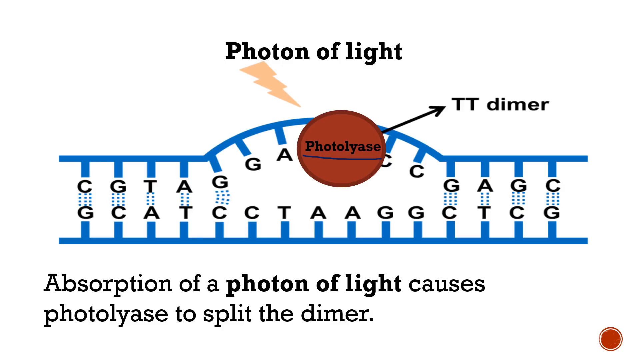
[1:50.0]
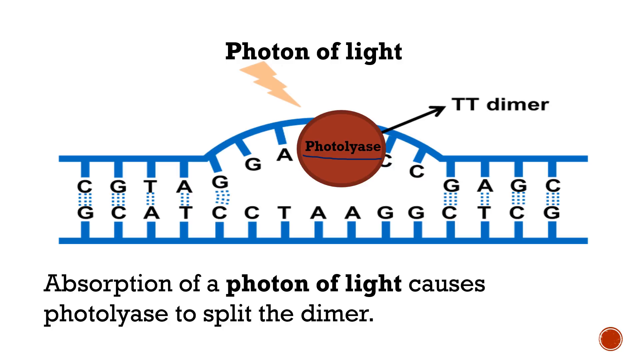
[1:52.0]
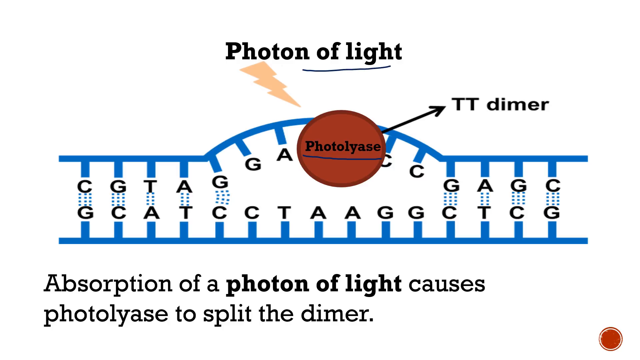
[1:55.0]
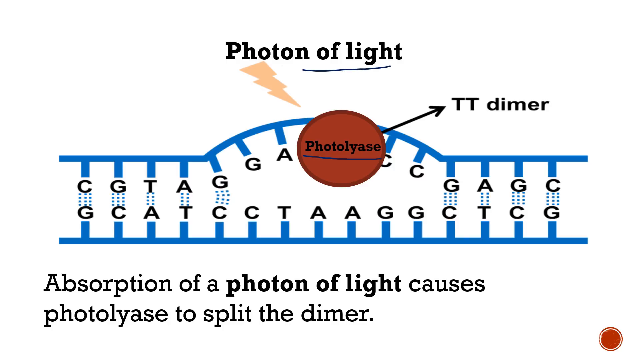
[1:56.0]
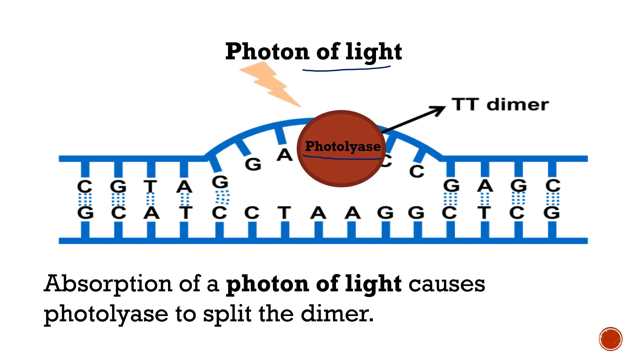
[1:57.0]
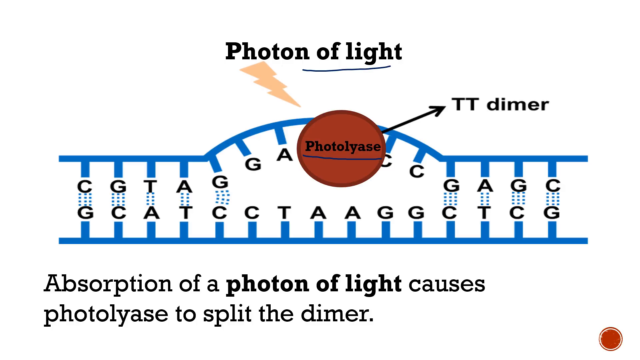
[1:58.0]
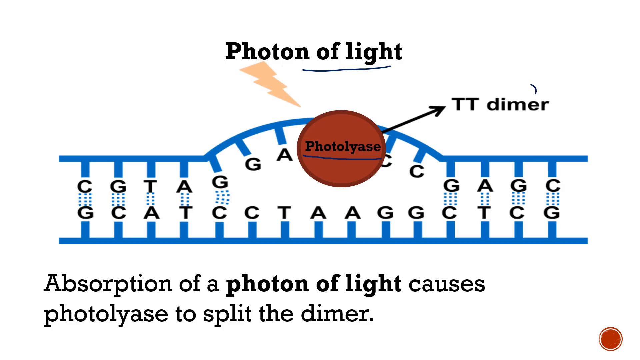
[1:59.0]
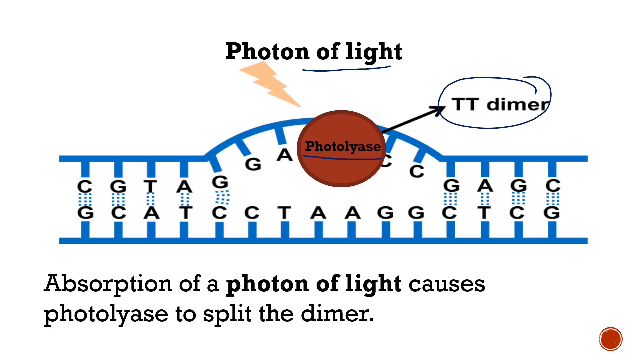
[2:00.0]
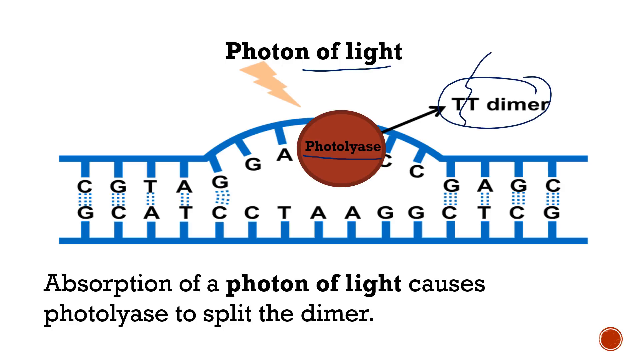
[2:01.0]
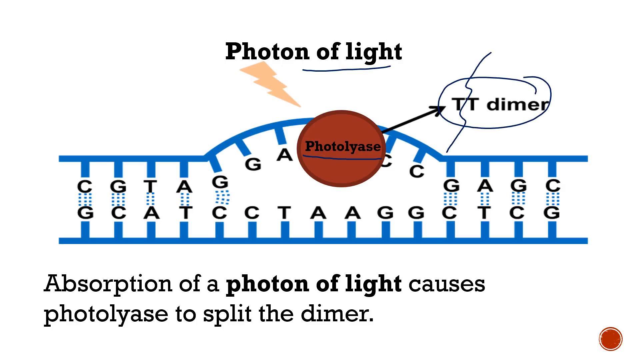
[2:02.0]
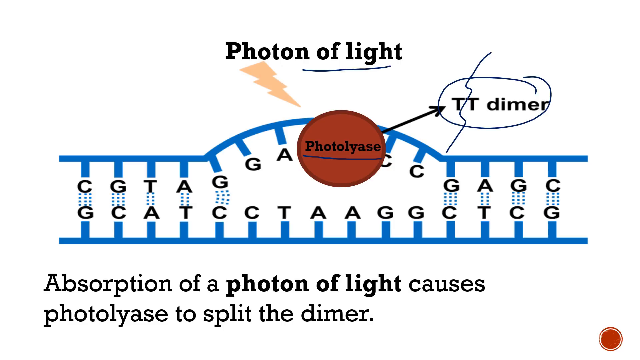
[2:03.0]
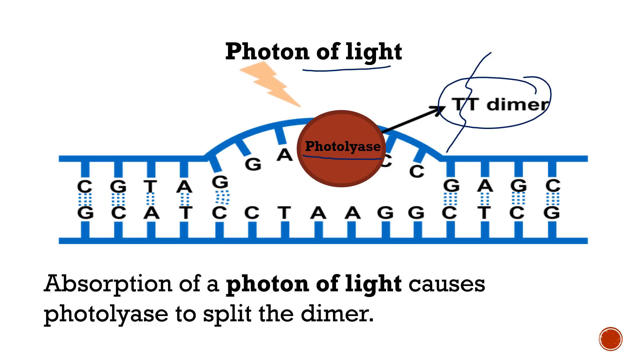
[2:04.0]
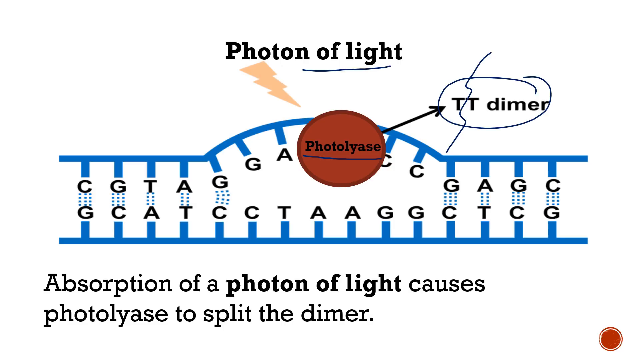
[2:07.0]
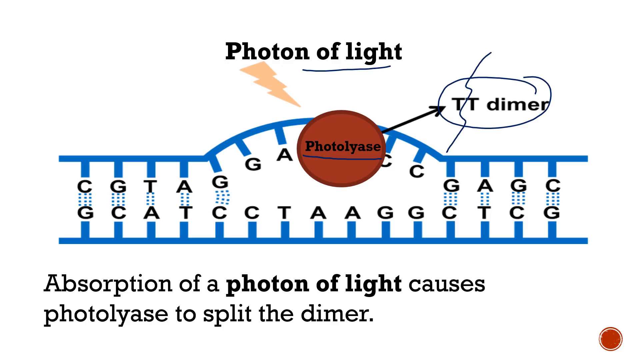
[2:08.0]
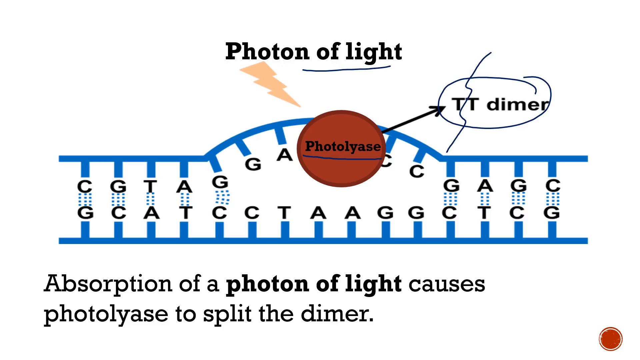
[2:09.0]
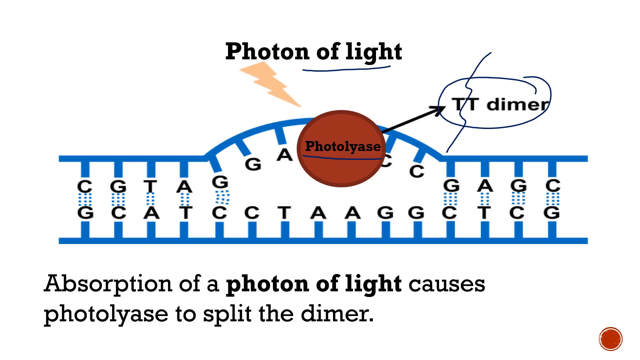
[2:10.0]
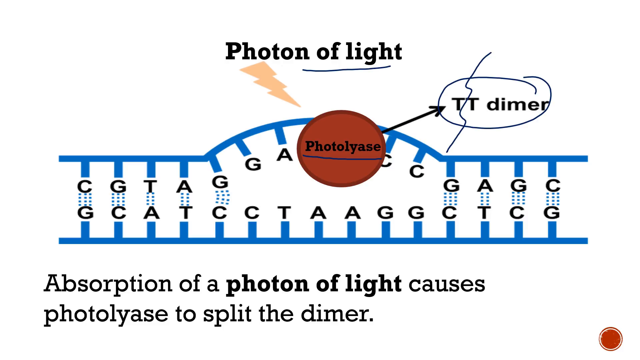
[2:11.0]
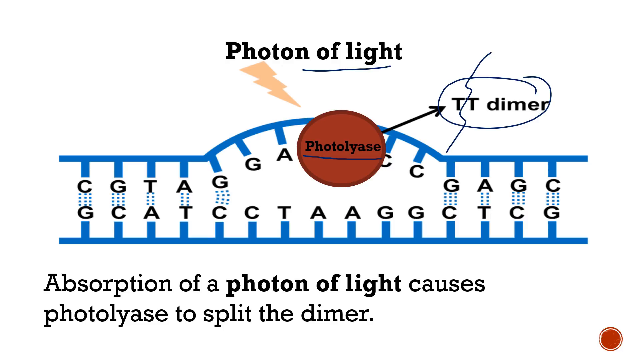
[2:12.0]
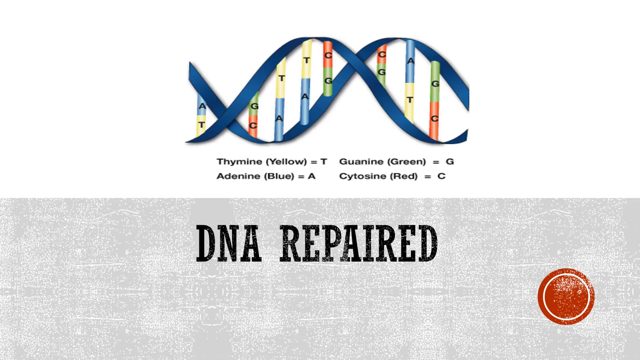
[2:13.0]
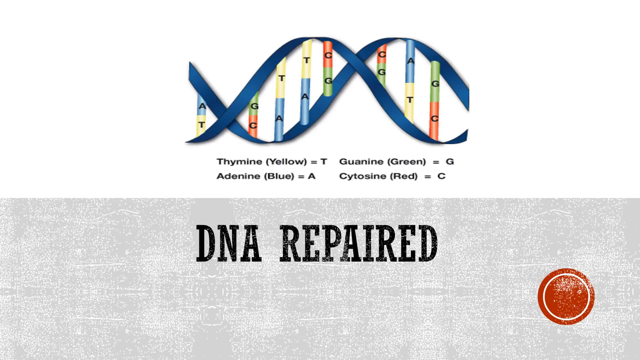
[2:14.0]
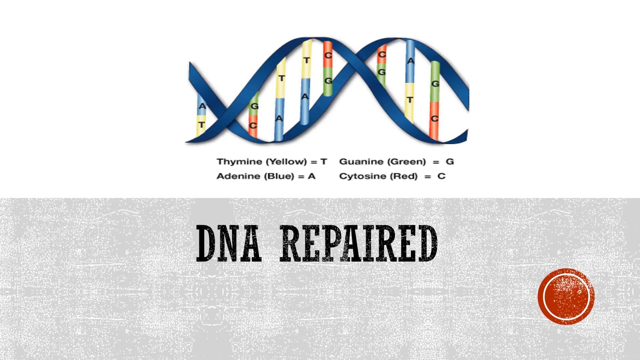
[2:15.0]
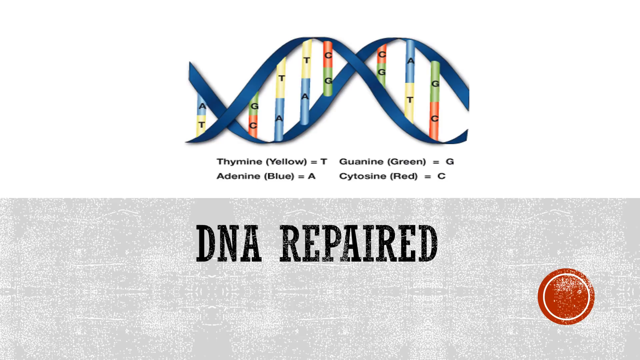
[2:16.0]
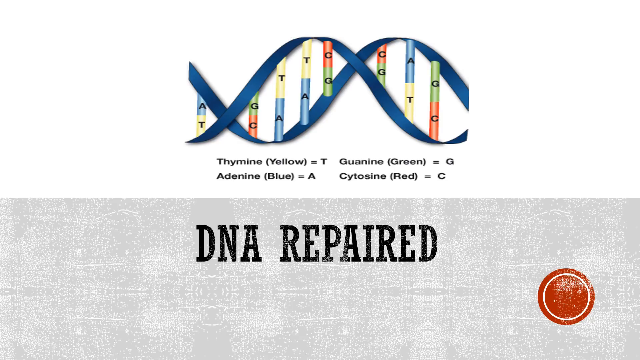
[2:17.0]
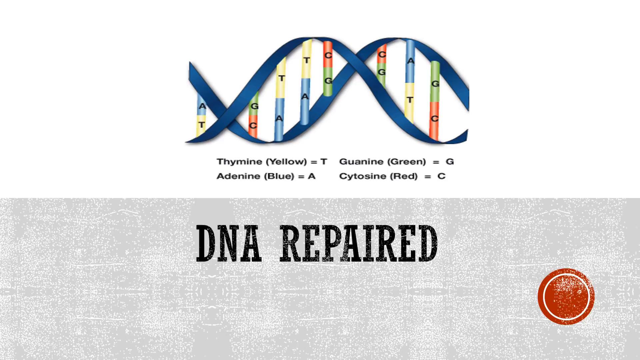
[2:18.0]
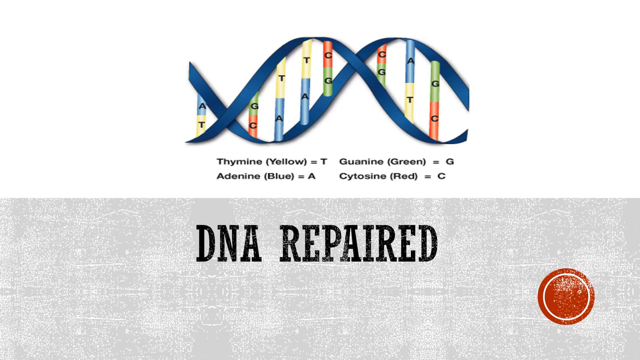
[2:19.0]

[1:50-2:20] The diagram shows a photon of light activating the enzyme. A different diagram then shows the repair, with different colorations for the bases, thymine sites and bonds along the length of the DNA sequence.